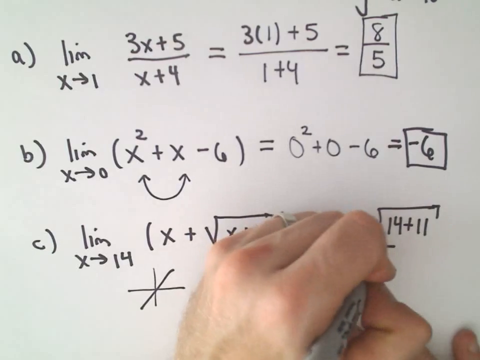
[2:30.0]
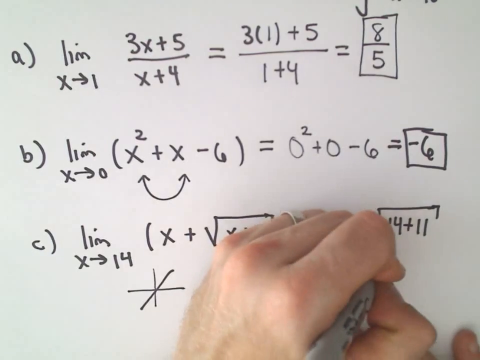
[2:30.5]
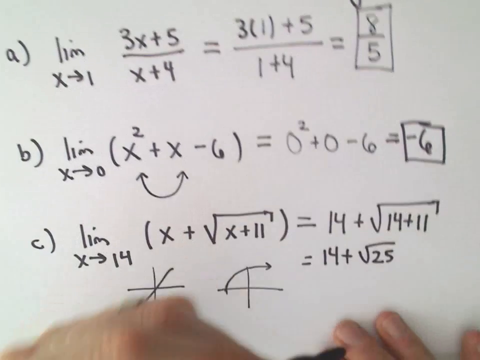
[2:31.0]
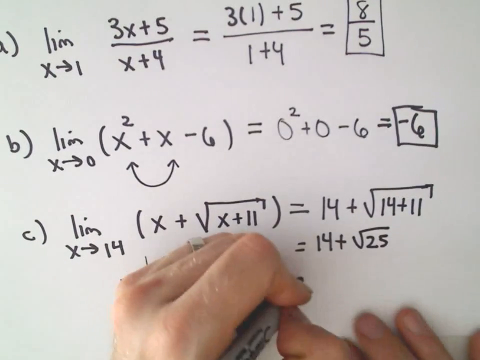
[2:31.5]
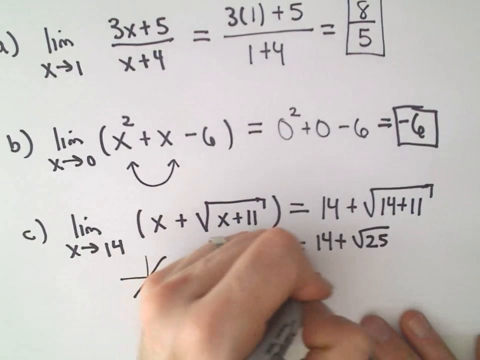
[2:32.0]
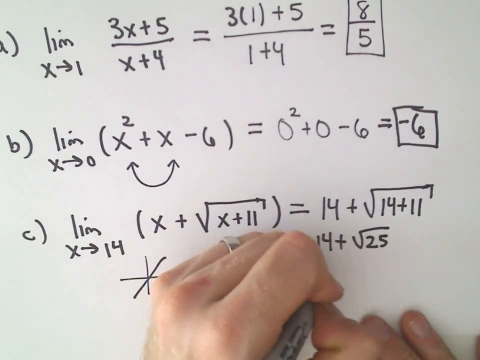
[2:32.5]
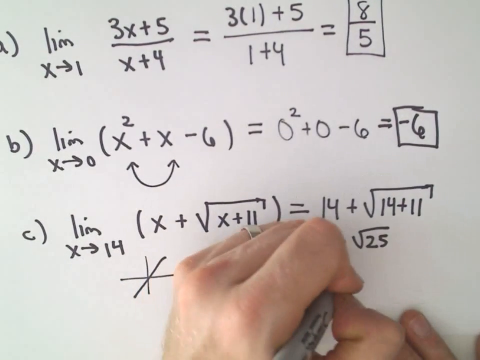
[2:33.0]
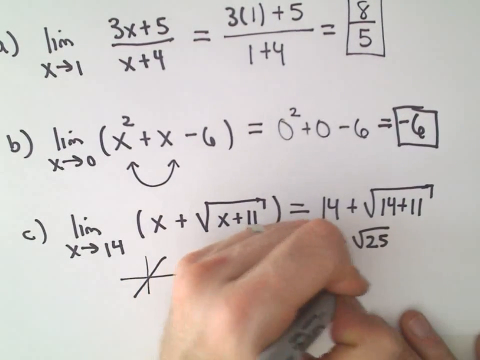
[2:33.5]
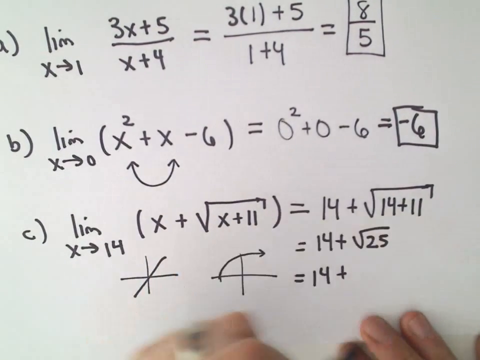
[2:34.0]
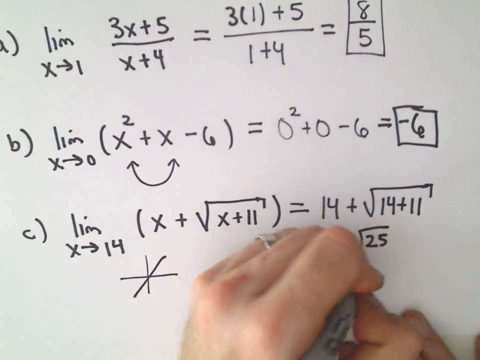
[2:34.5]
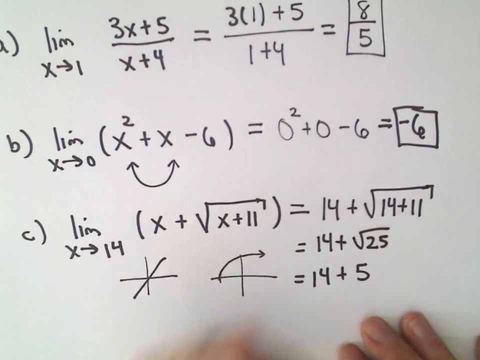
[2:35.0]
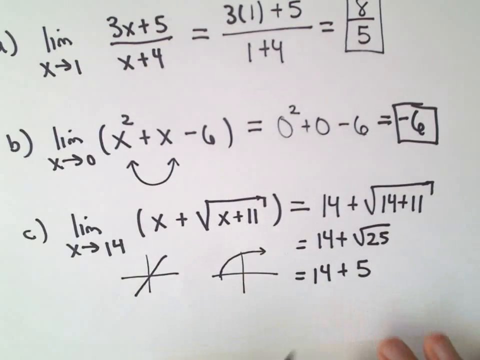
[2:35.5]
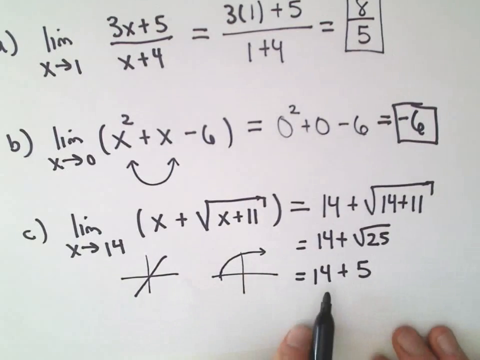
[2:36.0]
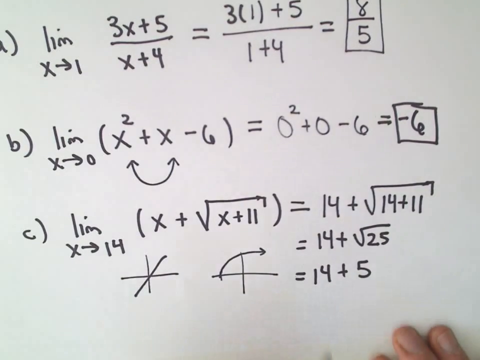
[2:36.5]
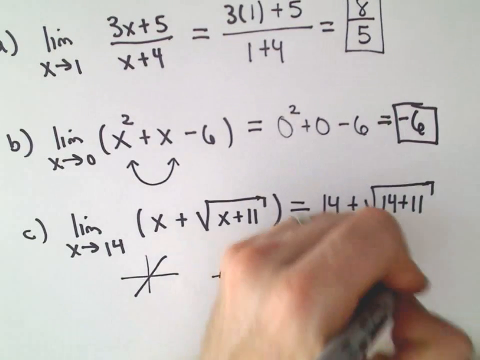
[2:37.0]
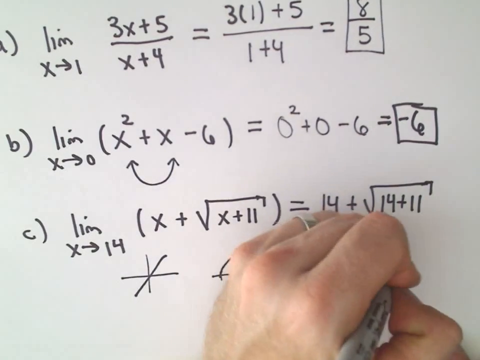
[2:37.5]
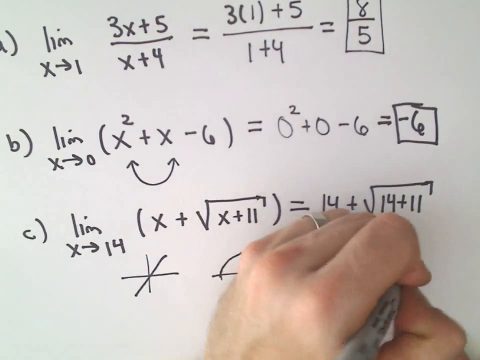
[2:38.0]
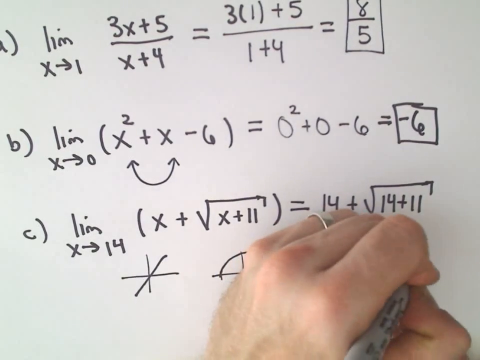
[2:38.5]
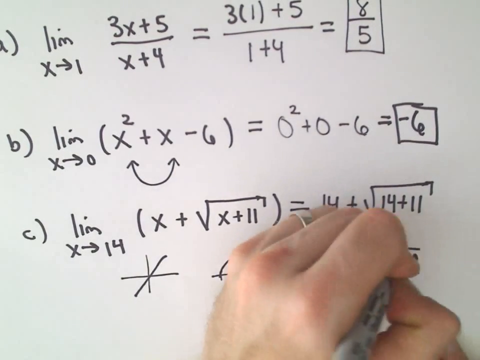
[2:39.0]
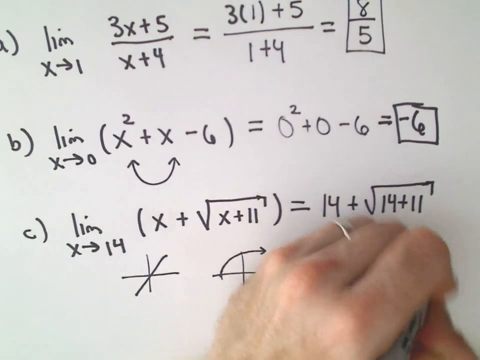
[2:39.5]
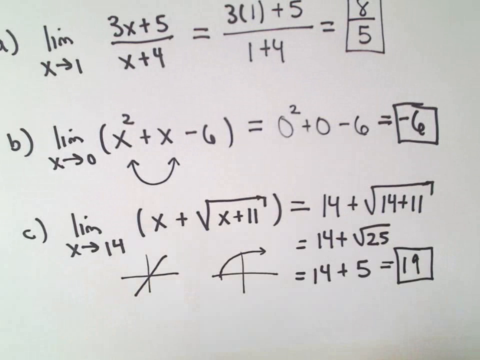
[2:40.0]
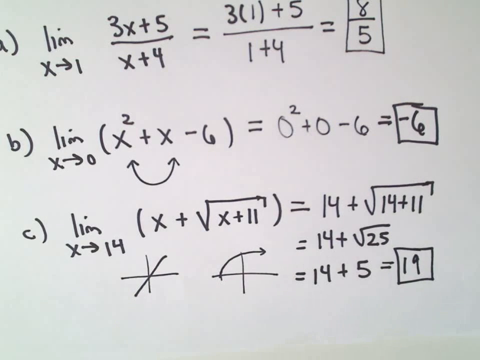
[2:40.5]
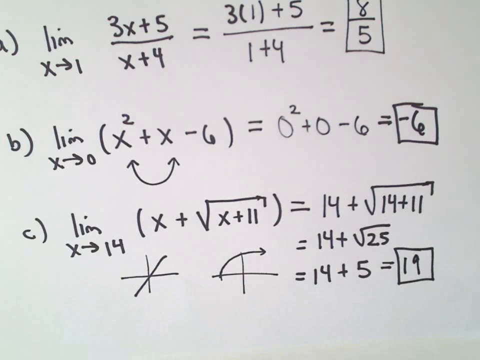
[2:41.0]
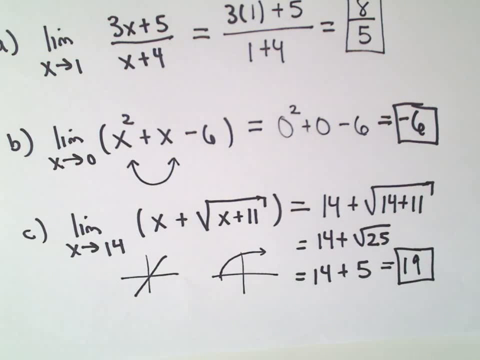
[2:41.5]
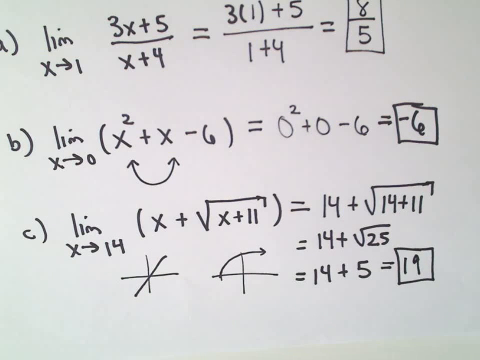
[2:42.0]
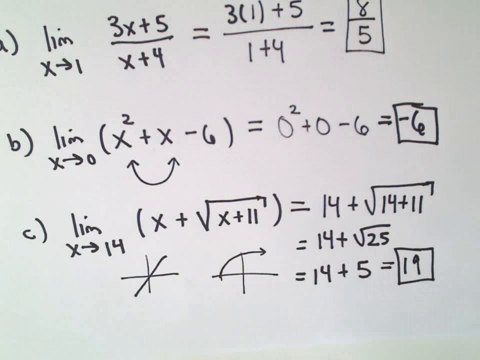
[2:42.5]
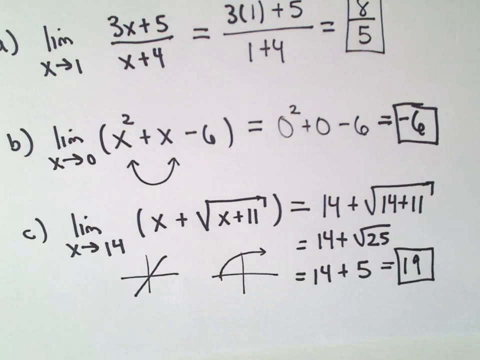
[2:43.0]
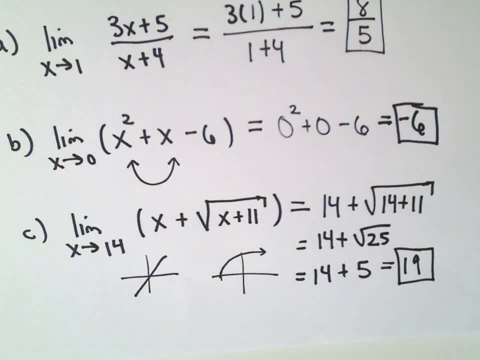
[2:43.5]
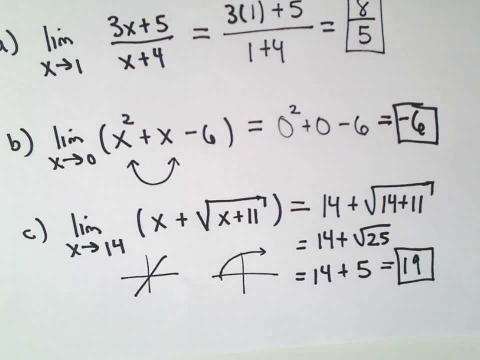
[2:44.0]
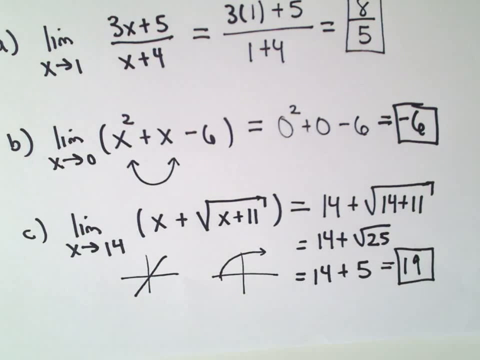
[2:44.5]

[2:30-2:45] The man writes faster and a bit smaller, making room to show his work. He has written 14 plus the power of 25 below the last line of equation C. His hand now appears to have a ring on the index finger, and he holds the black sharpie. Under 14 plus the power of 25 he appears to write again: 14 plus 5. He briefly points the sharpie at the 14, then brings his hand back up and continues writing, though what he writes cannot be seen. He then moves his hand away, revealing the number 19, and draws a square around it. The video ends abruptly.